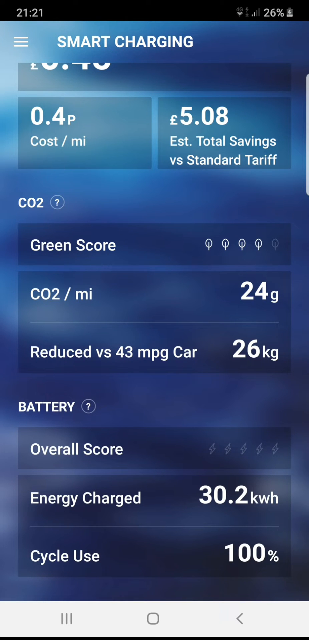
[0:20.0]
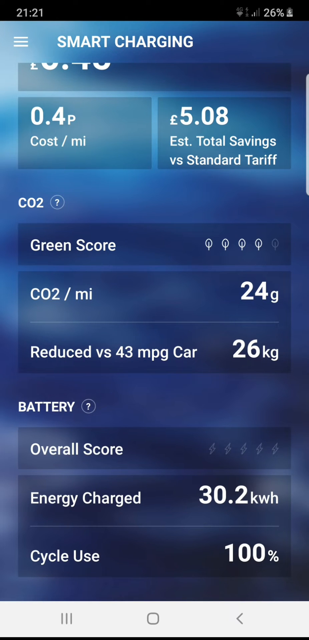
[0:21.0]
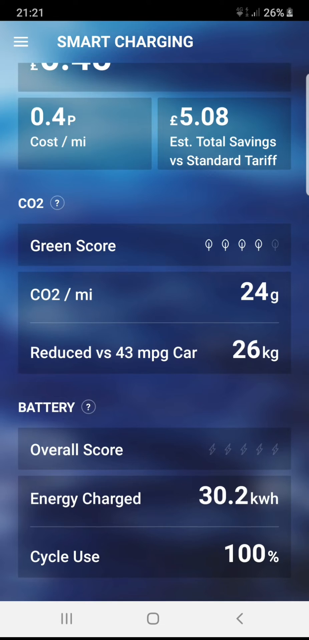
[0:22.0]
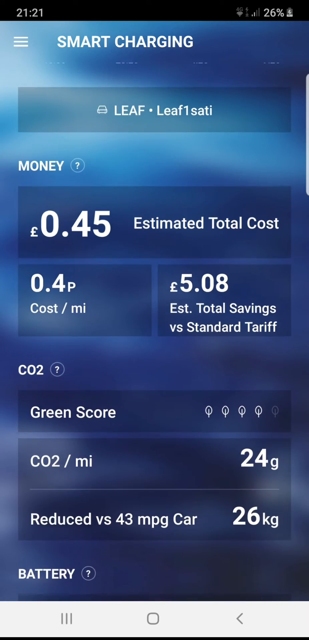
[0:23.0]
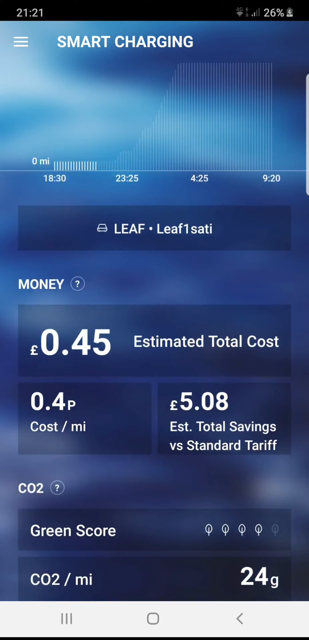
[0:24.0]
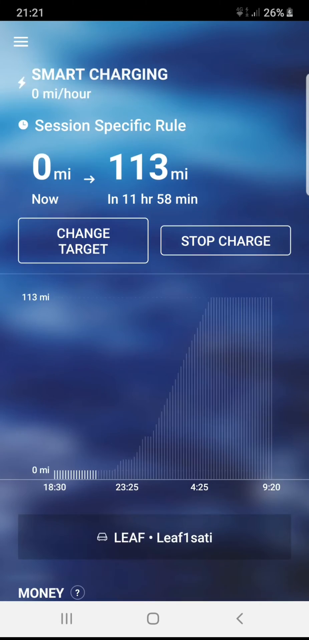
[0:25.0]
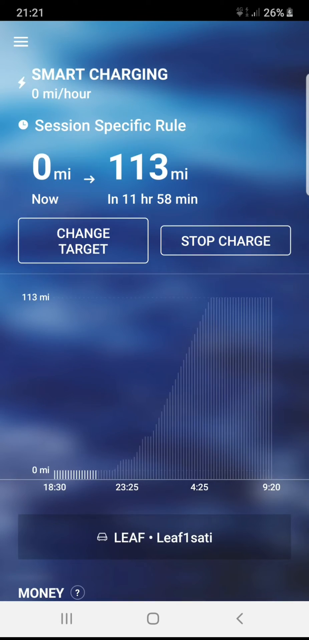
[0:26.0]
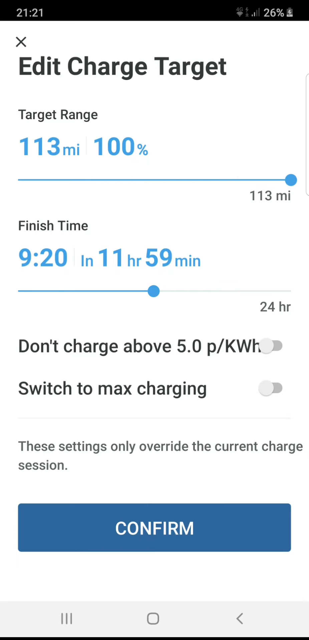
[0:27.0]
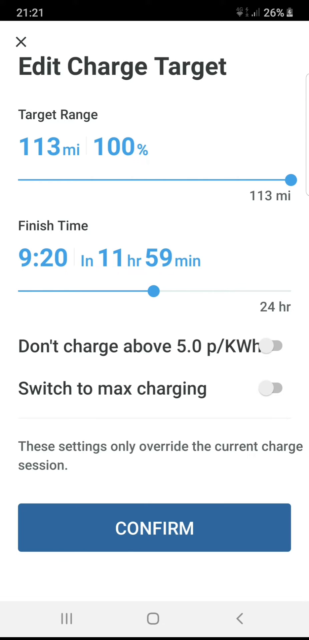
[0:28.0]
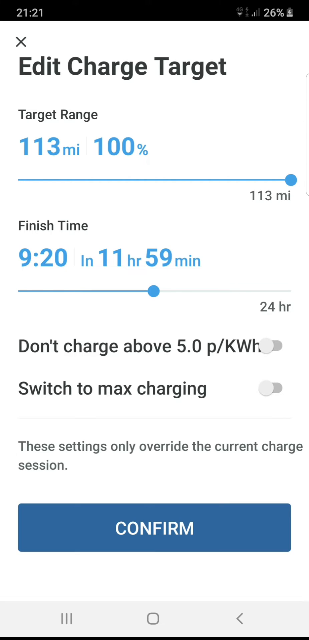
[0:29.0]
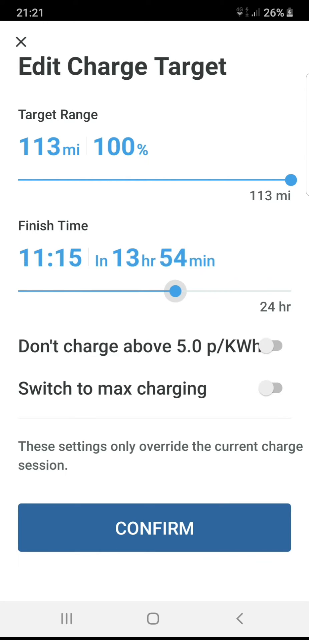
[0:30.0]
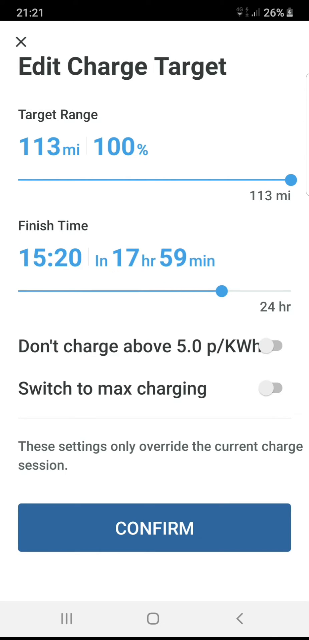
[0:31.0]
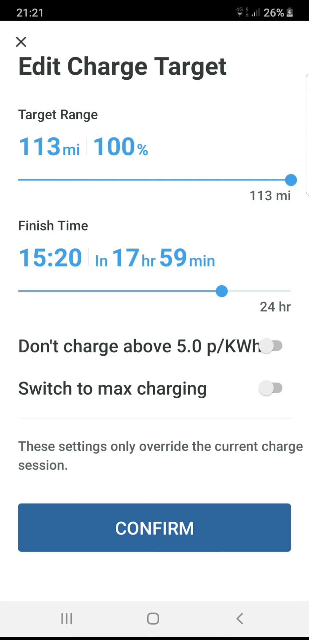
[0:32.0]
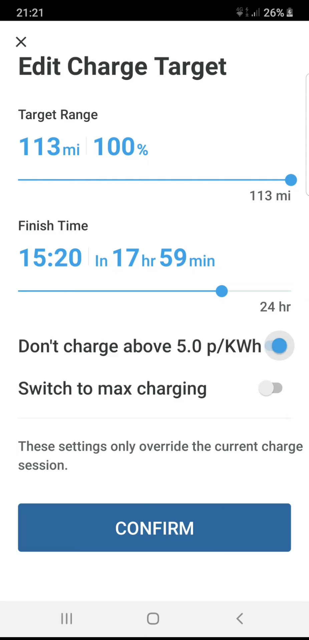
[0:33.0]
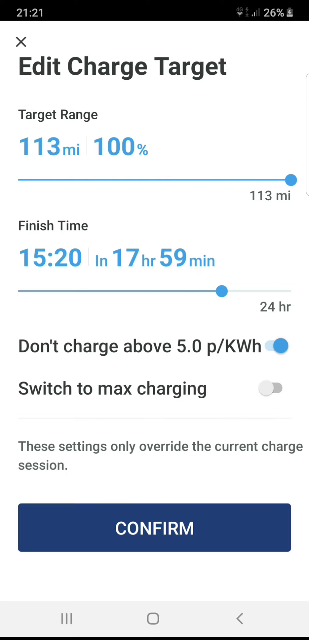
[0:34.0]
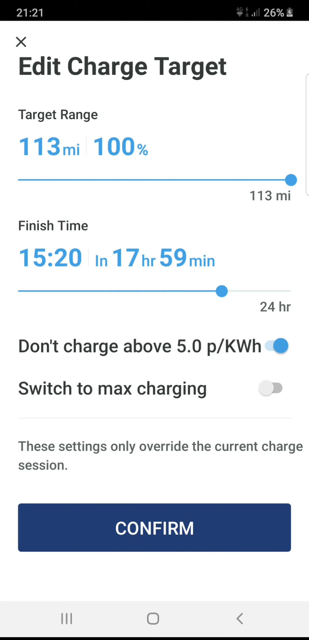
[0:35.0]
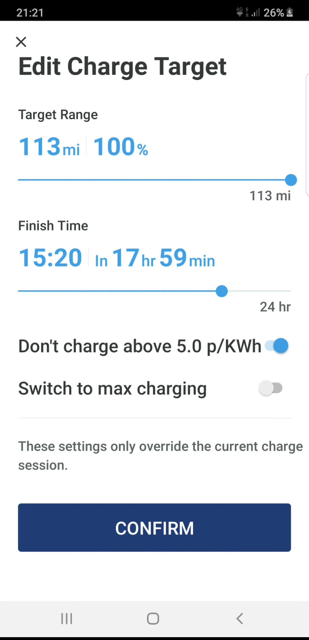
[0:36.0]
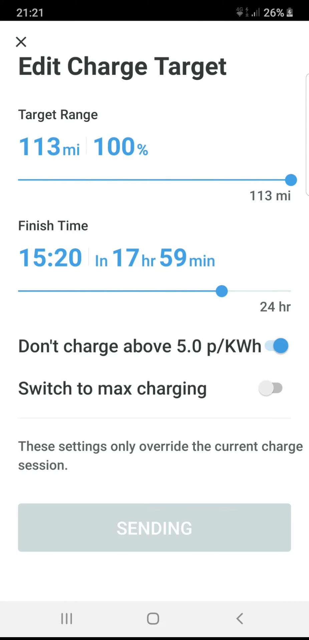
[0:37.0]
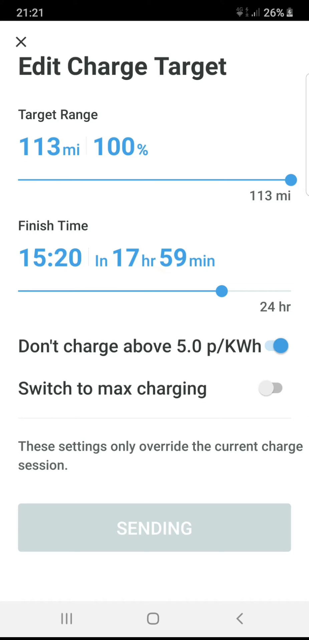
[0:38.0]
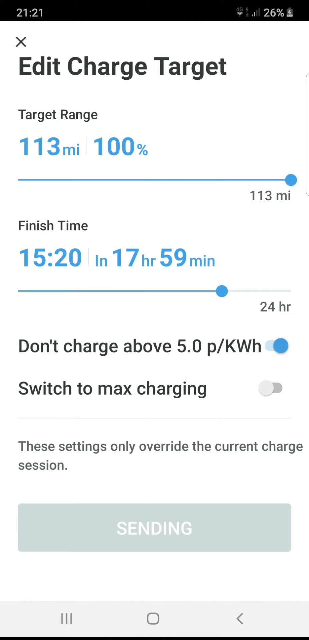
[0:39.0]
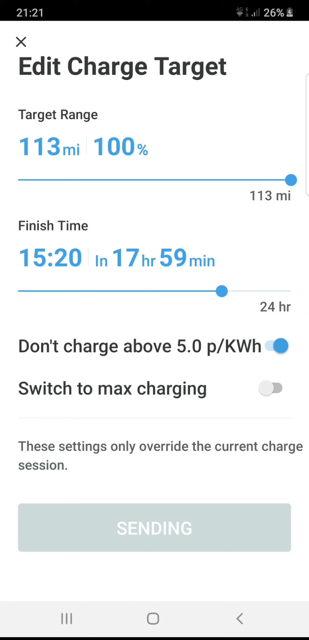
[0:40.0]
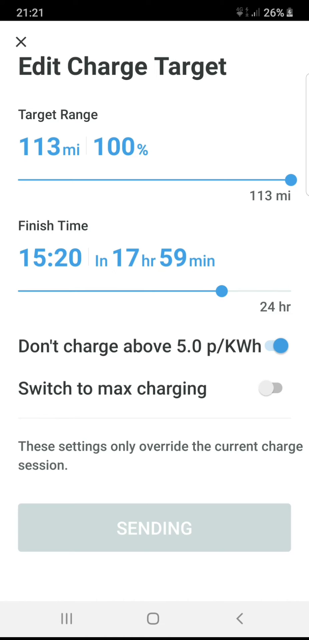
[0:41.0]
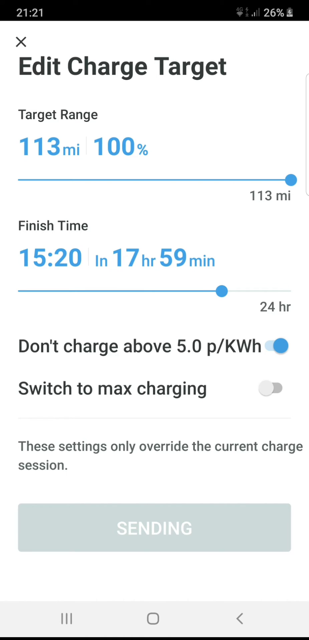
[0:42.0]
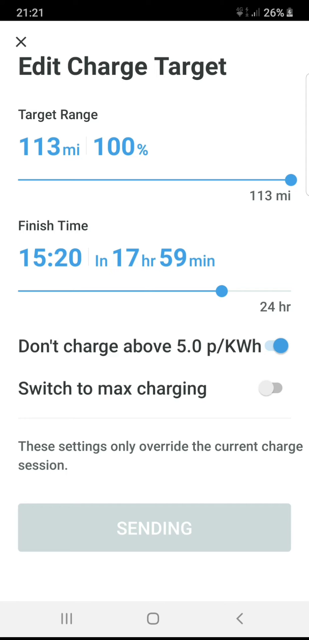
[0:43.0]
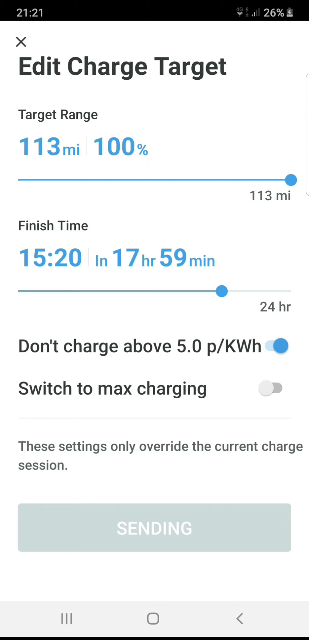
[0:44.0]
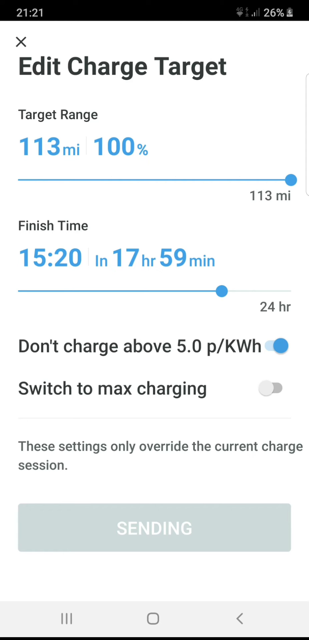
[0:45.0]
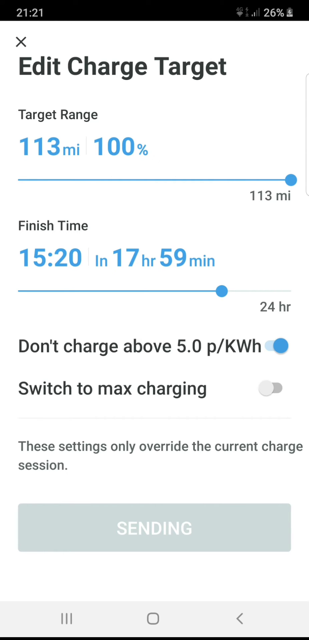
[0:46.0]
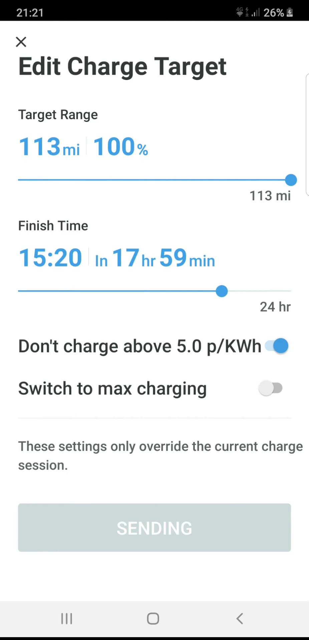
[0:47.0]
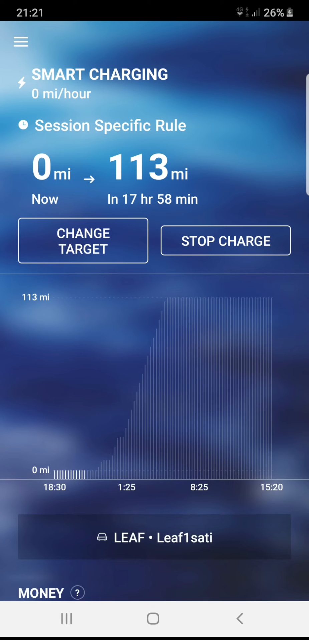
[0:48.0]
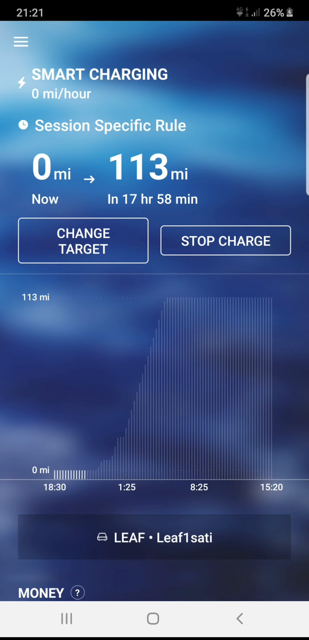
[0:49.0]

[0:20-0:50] The screen is scrolled back up. Its blue somewhat mimics the sky, lighter at the top and darker further down. The edit charge target screen then appears with various options: the target range has an adjustable line, and there is a finish time as well. There are also two toggles, "don't charge above 5.0" and "switch to maximum charging"; the "don't charge above 5.0" toggle is switched to blue. To change the finish time, the blue dot is moved so the charge finishes in 15 hours; finish times of 3.20, which was 17 hours 59 minutes away, and 9.20 also appear.